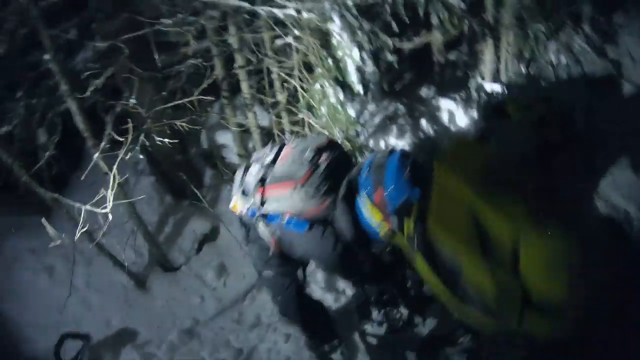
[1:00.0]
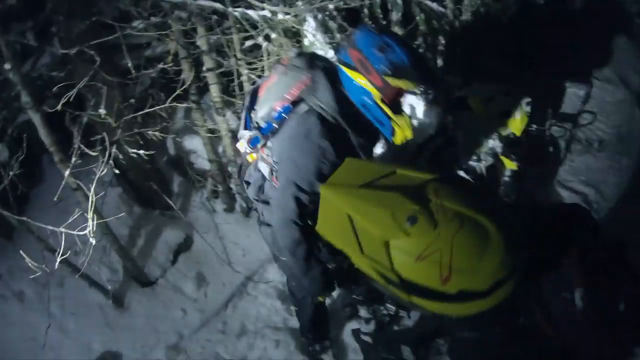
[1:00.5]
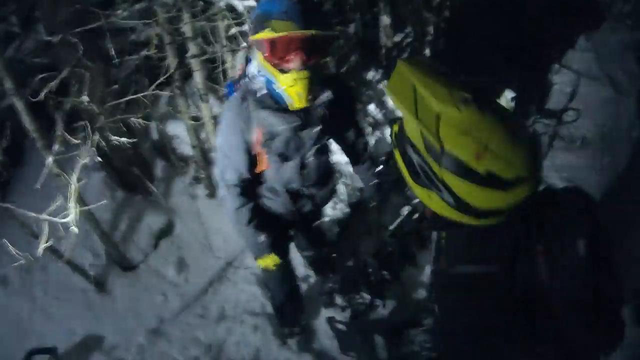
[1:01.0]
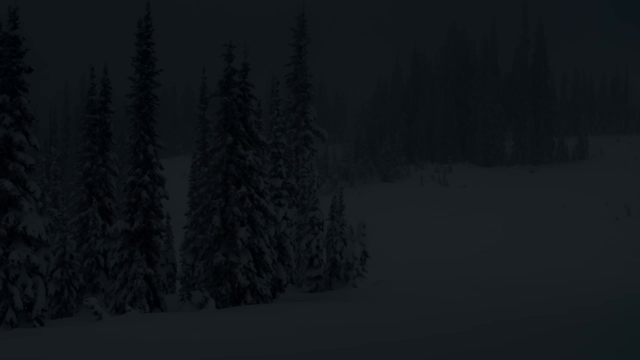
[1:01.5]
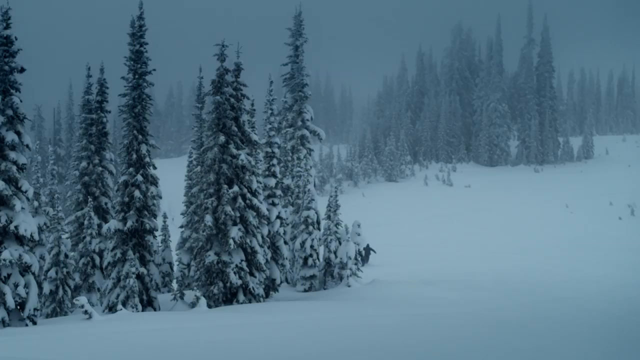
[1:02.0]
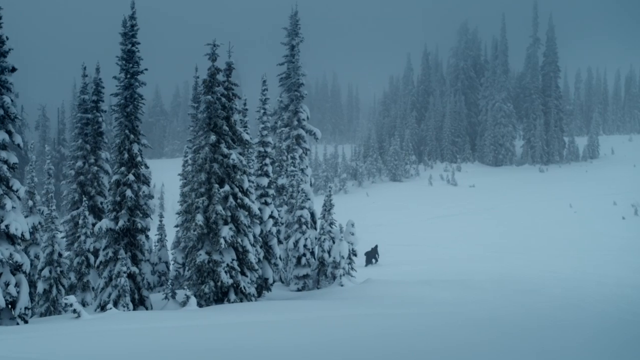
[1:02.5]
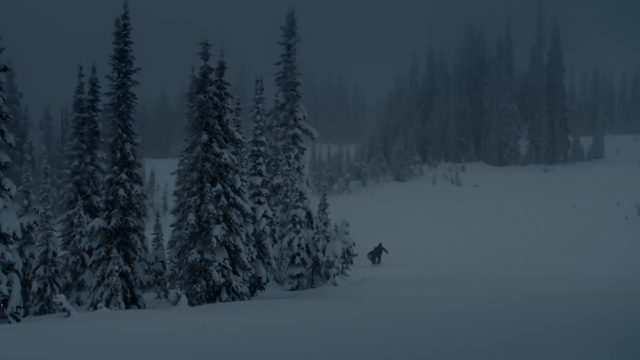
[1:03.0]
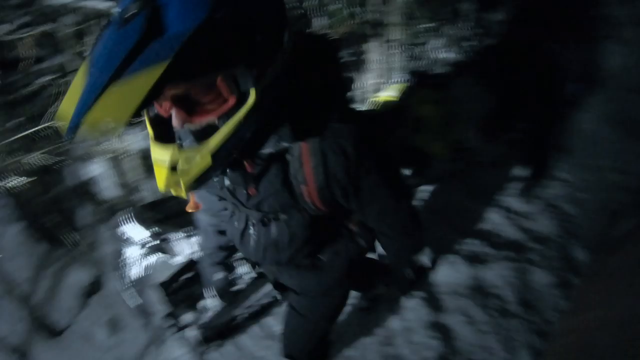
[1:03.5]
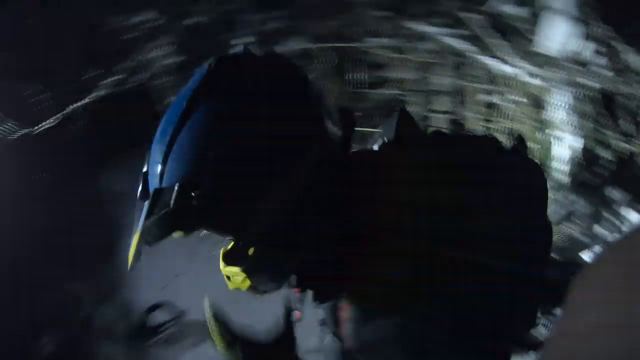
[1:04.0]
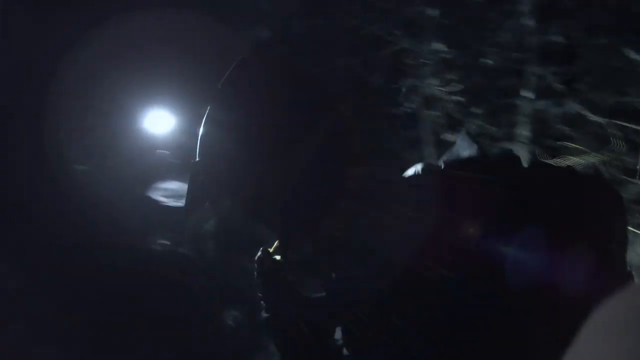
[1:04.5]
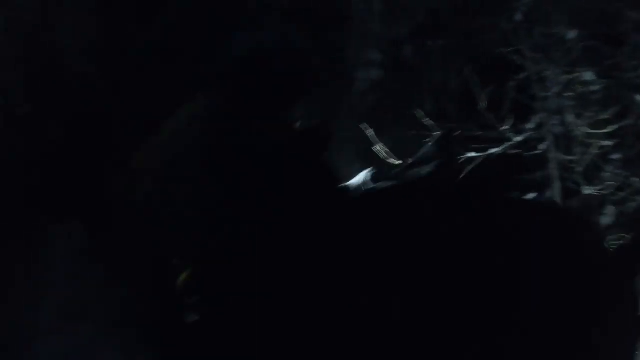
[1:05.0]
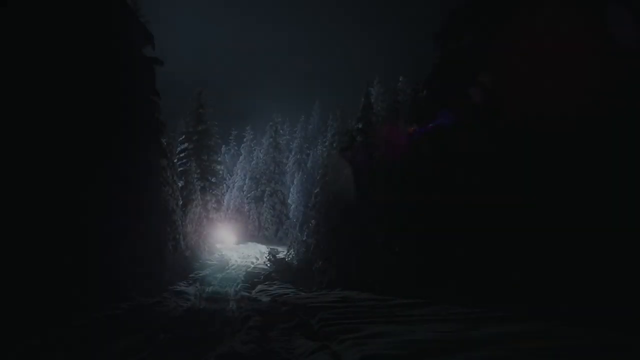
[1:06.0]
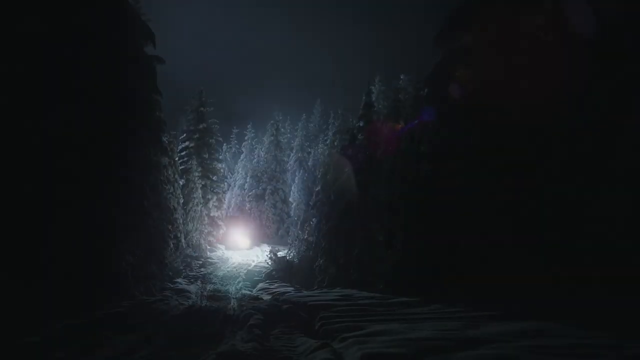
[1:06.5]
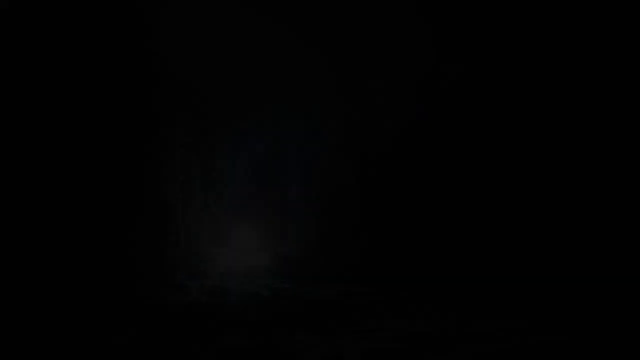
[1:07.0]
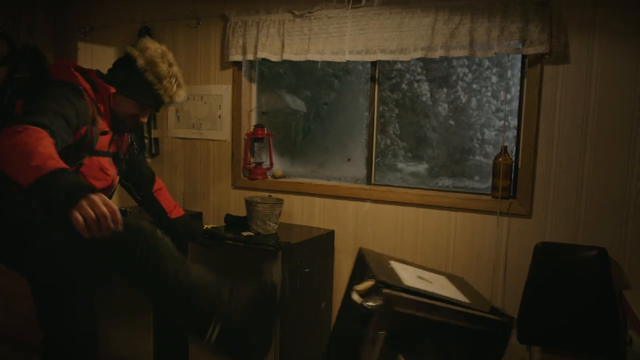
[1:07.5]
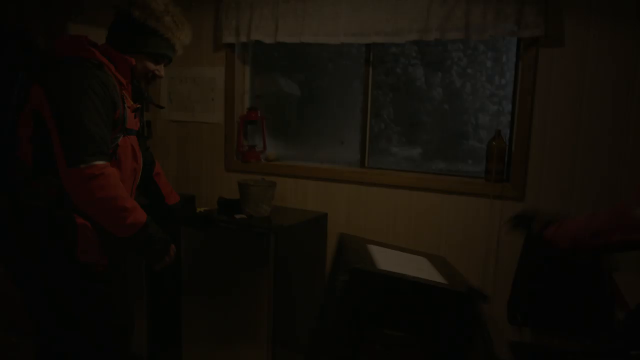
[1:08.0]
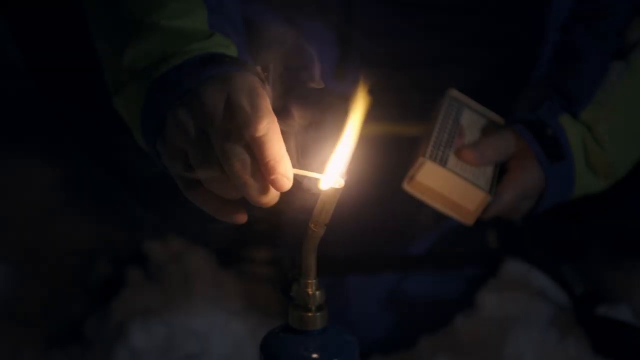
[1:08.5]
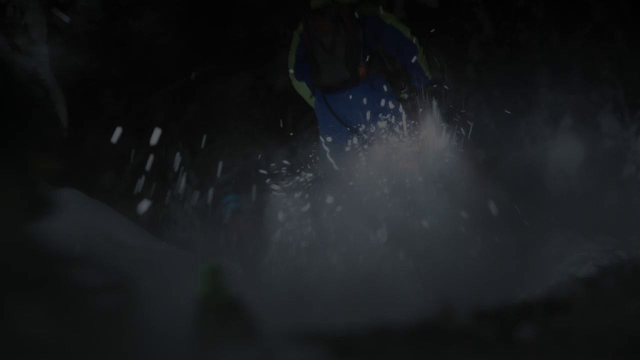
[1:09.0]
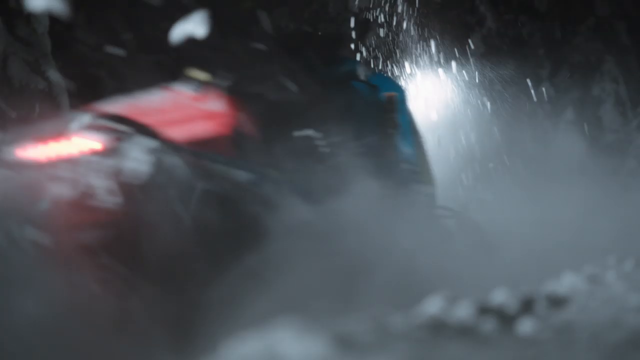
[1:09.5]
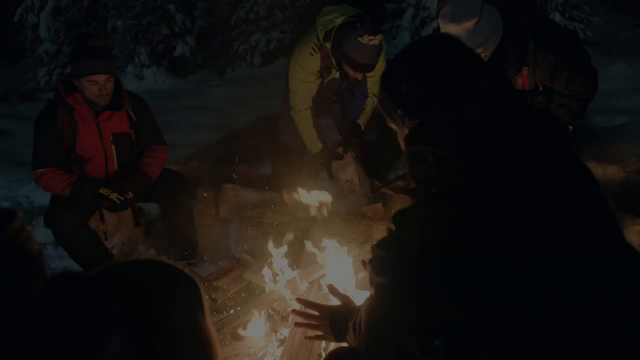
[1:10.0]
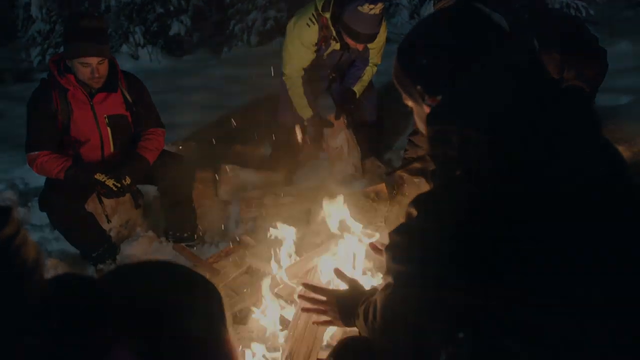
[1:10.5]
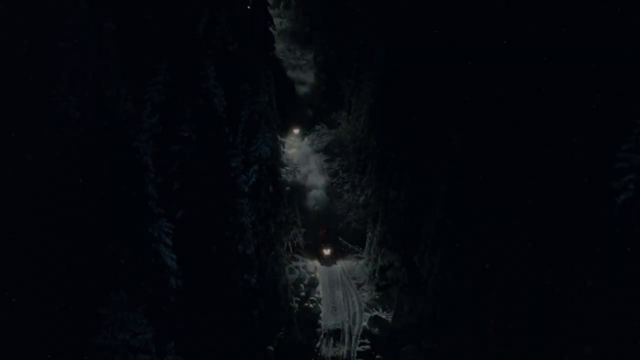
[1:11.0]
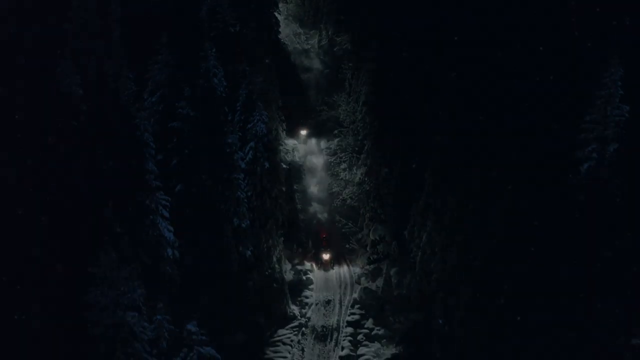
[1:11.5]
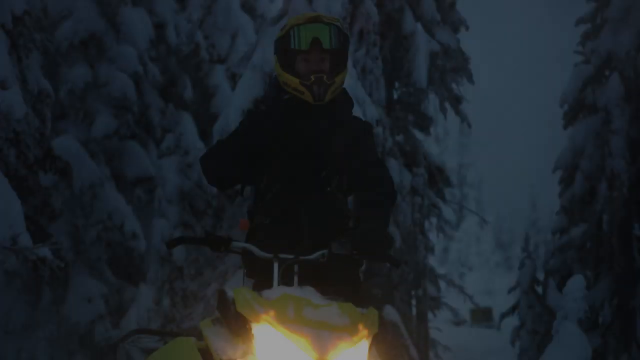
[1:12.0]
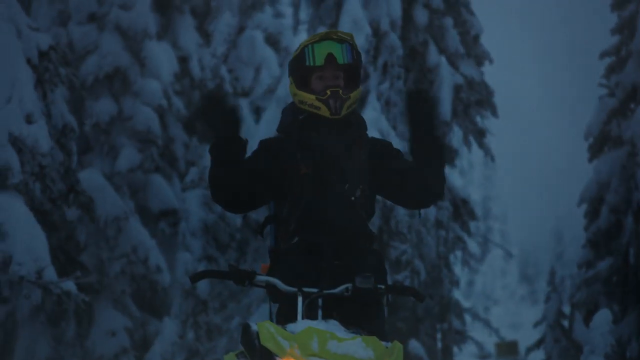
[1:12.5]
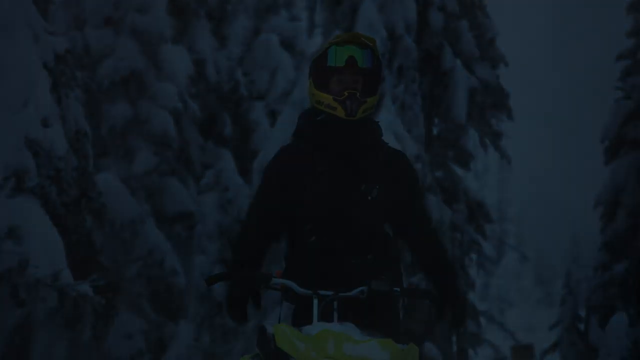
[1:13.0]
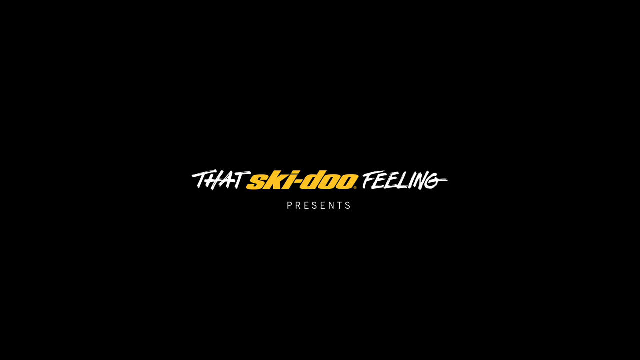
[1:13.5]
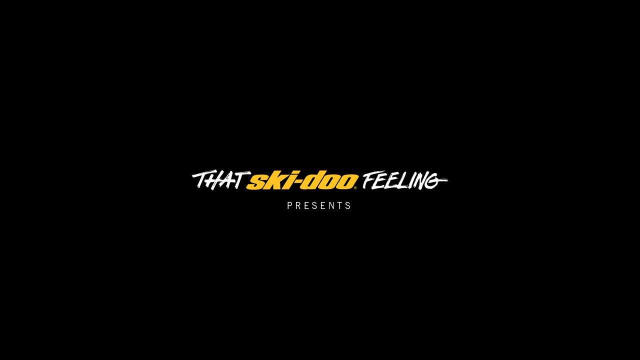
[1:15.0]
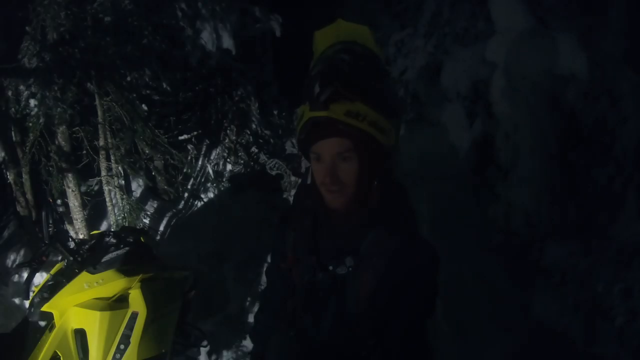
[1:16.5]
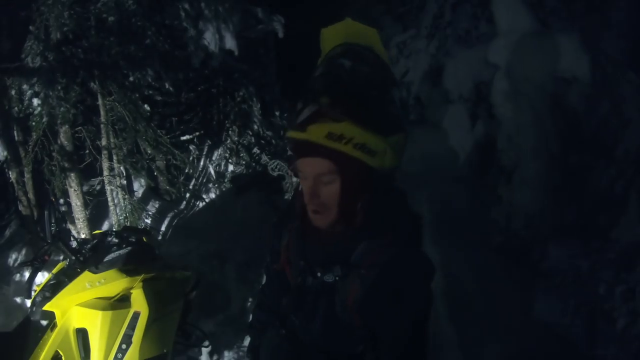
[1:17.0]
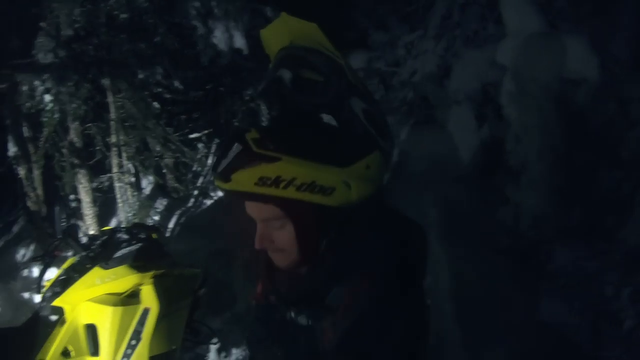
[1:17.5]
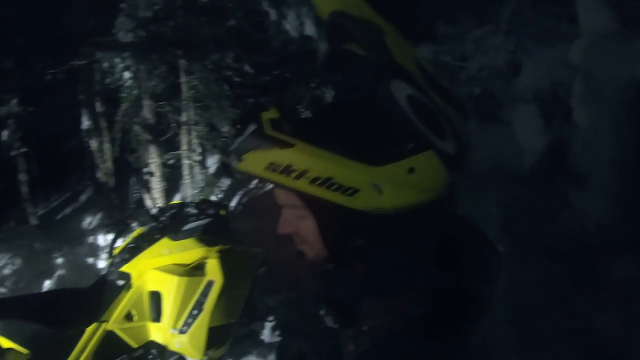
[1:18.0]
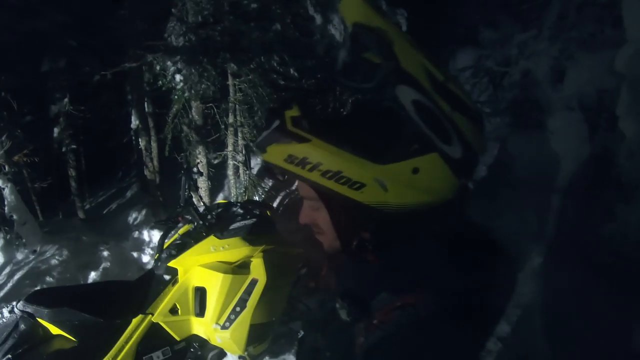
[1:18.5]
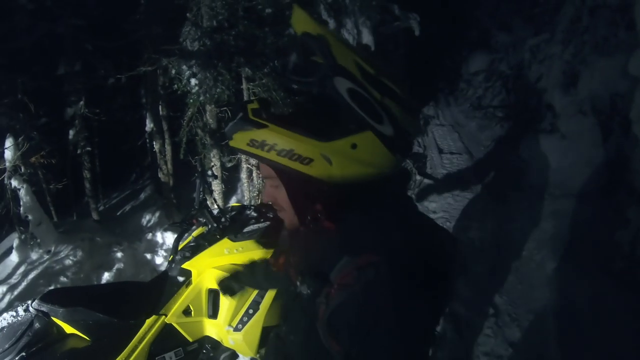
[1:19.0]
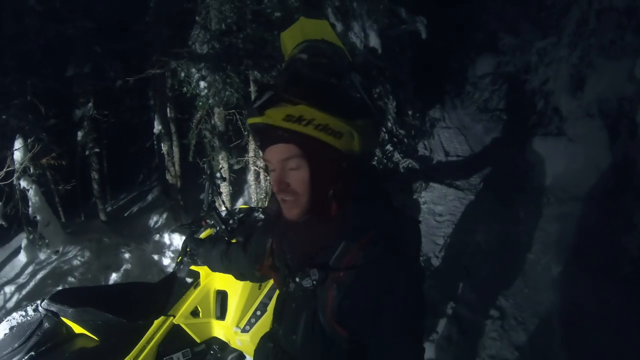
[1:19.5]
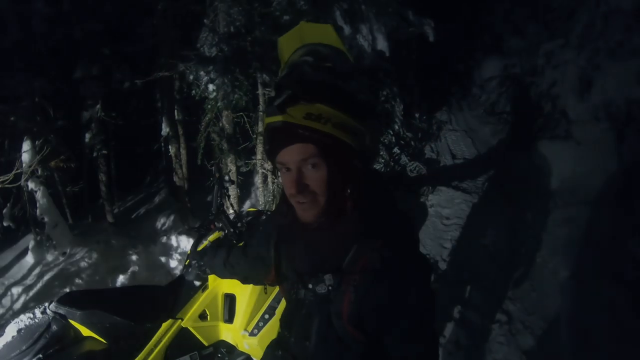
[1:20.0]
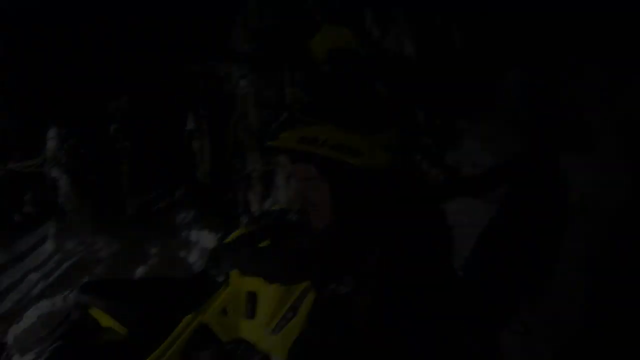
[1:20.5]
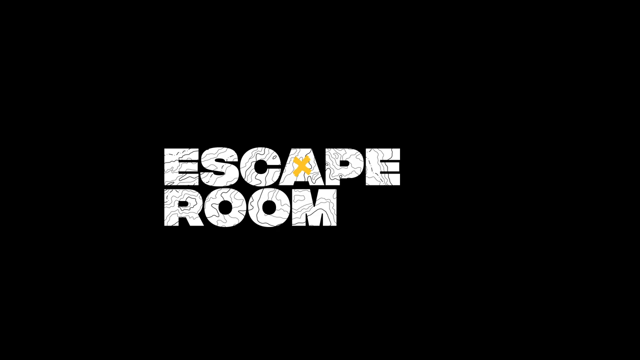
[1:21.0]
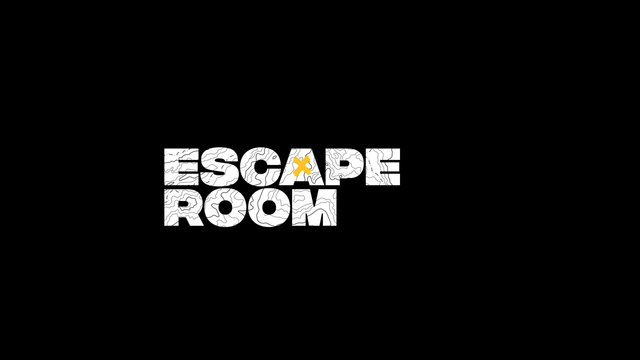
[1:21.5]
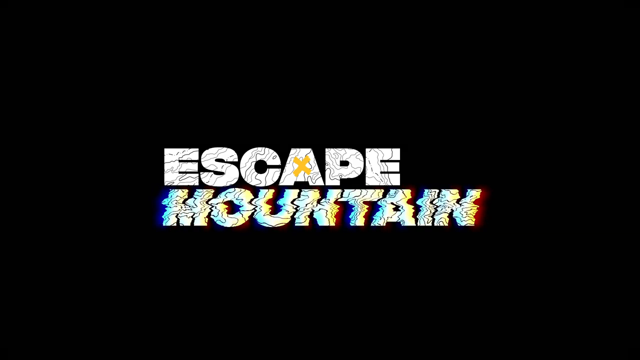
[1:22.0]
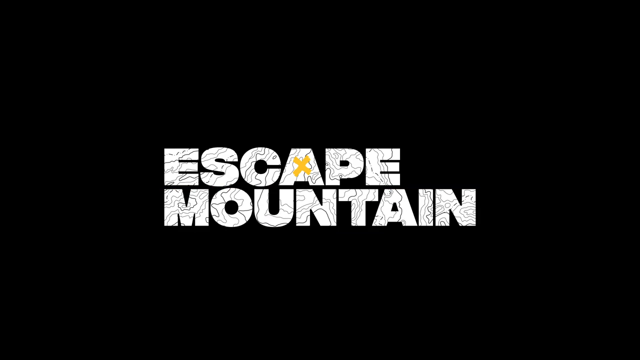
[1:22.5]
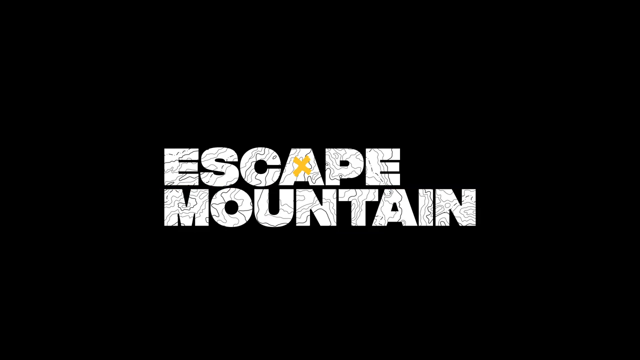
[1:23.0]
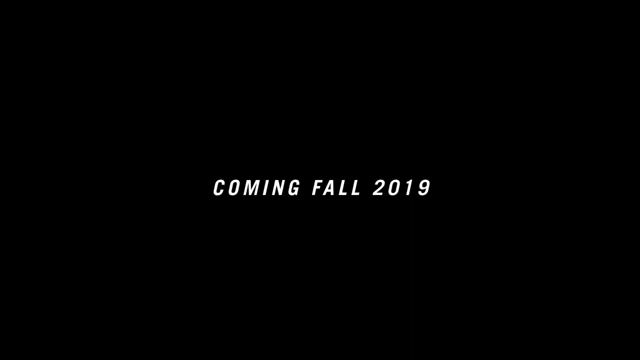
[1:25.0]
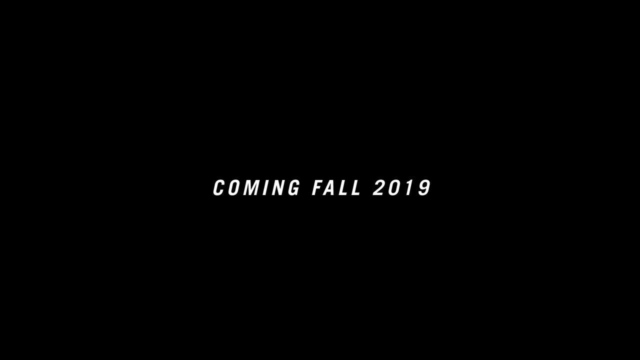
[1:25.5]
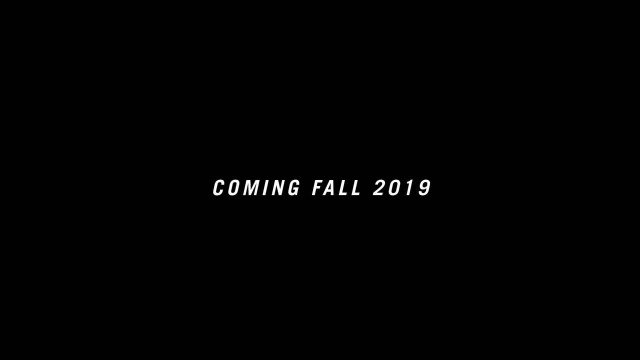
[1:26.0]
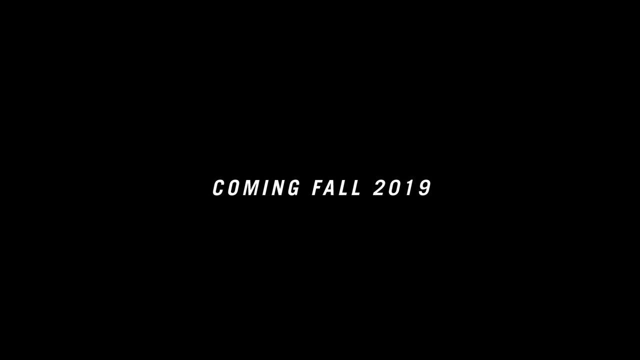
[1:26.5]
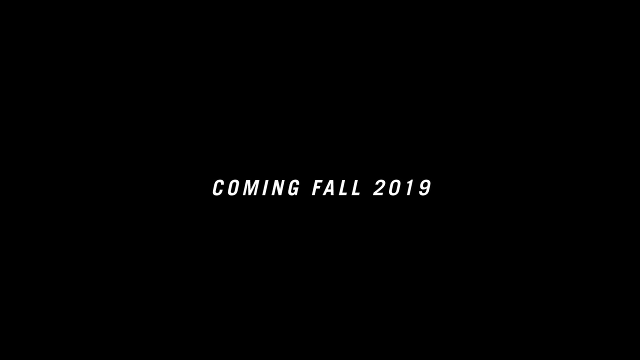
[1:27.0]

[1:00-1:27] In the middle of the woods the group keeps going. Everyone is warming their hands, stopping and taking breaks. This appears to be a new game show or series, something like an escape mountain, coming in 2019. The people race through the remote snowy area, with a roller determining which challenge they must do, and their faces show excitement and shock when they learn the challenge.